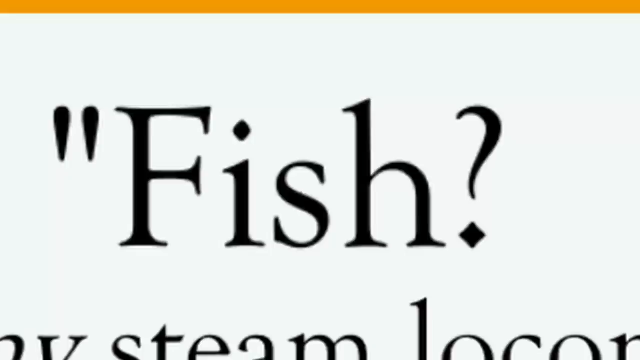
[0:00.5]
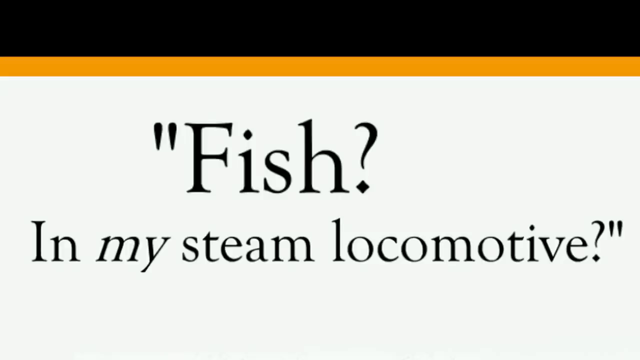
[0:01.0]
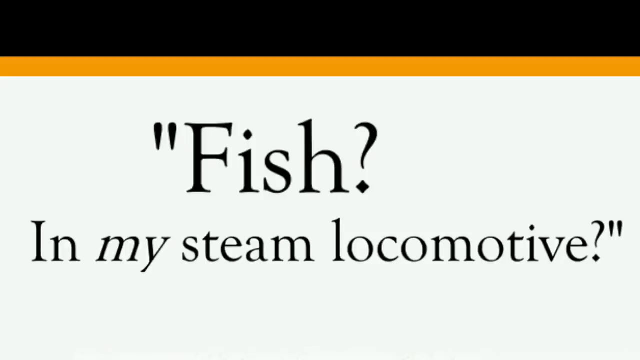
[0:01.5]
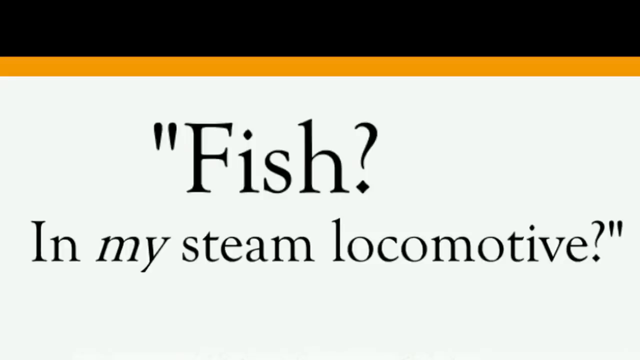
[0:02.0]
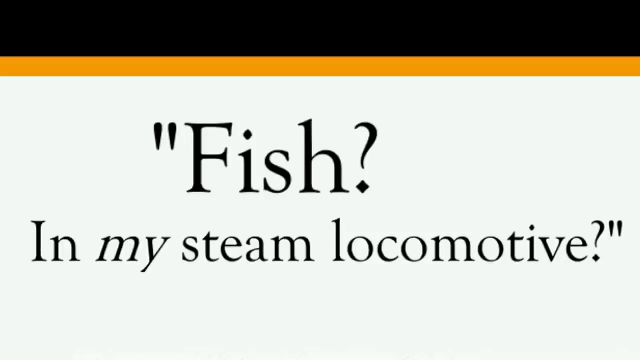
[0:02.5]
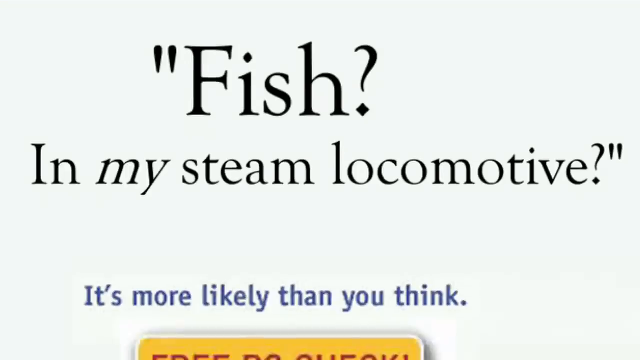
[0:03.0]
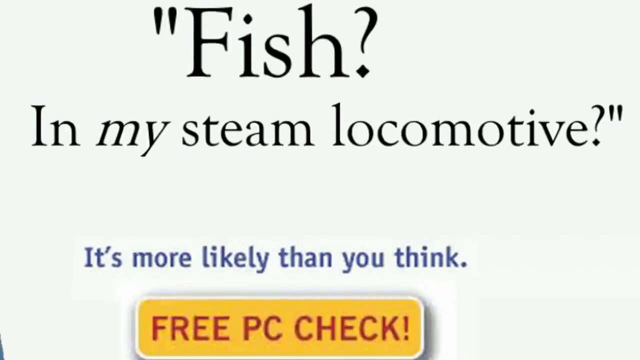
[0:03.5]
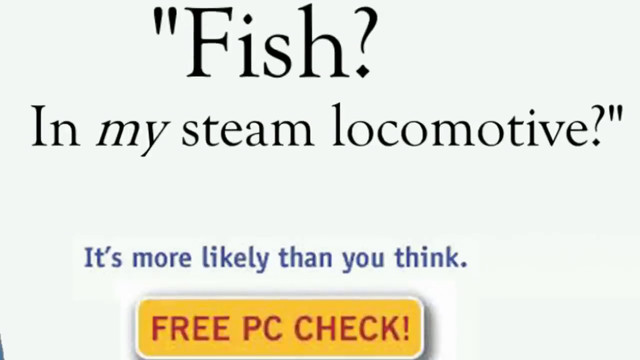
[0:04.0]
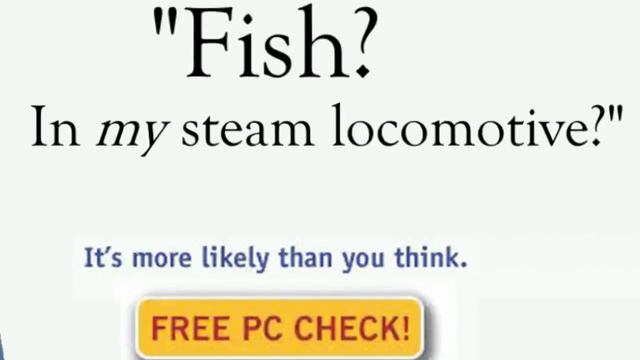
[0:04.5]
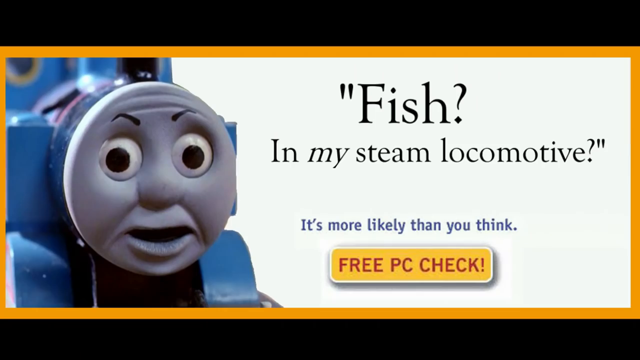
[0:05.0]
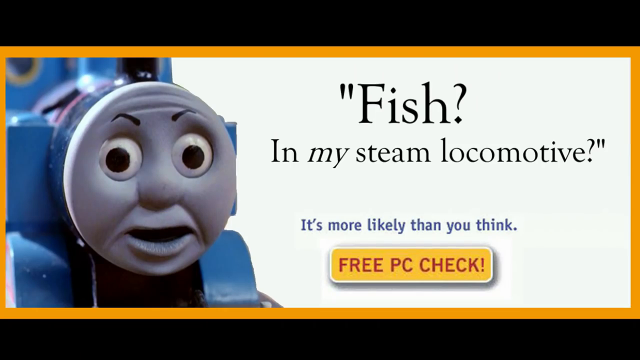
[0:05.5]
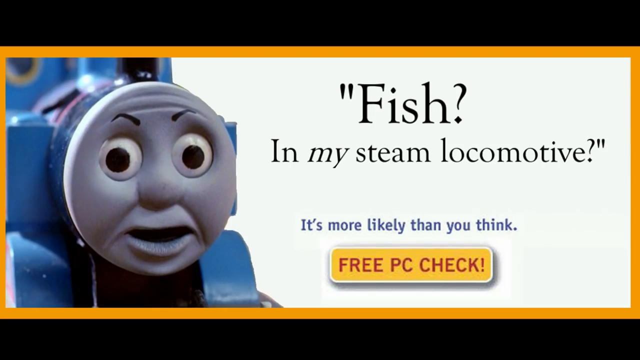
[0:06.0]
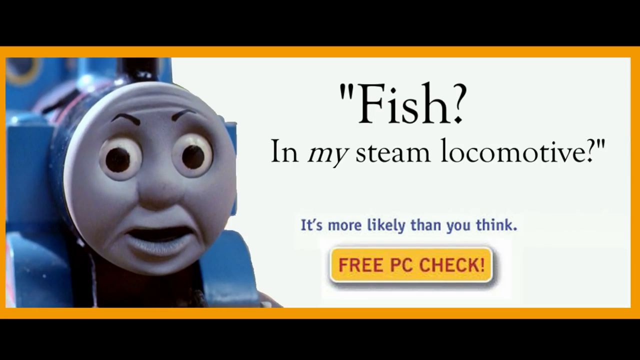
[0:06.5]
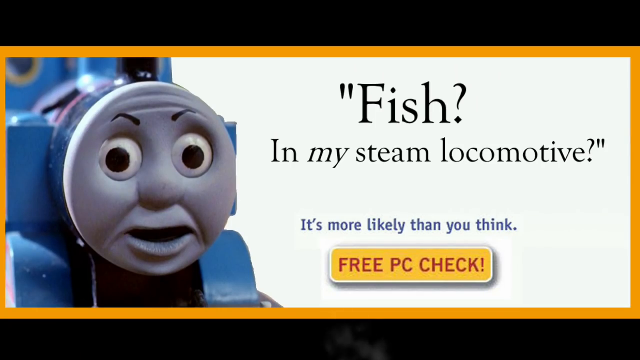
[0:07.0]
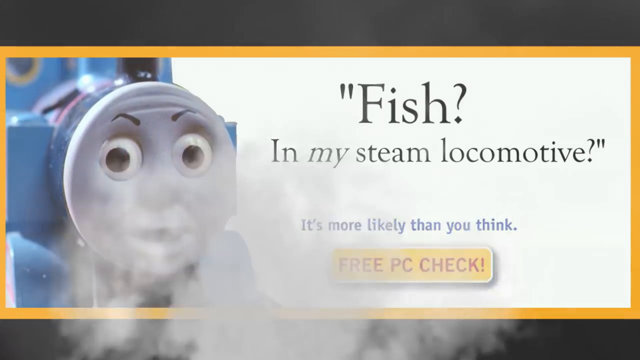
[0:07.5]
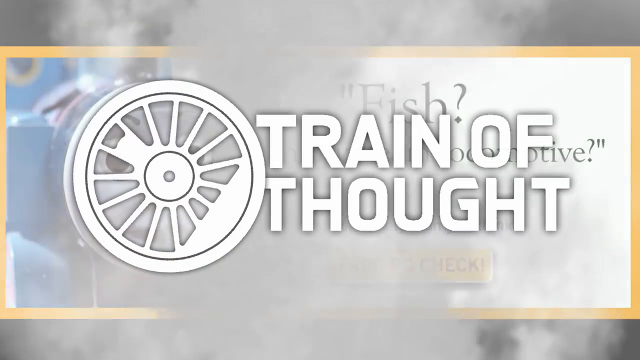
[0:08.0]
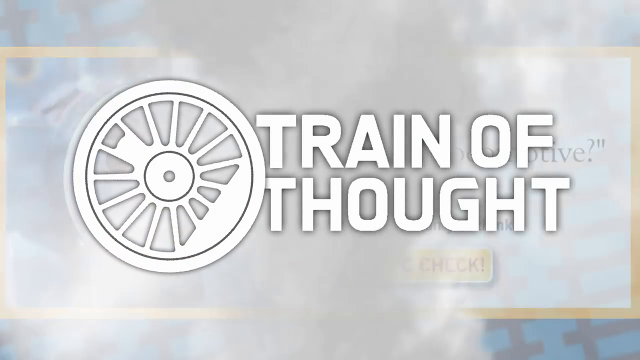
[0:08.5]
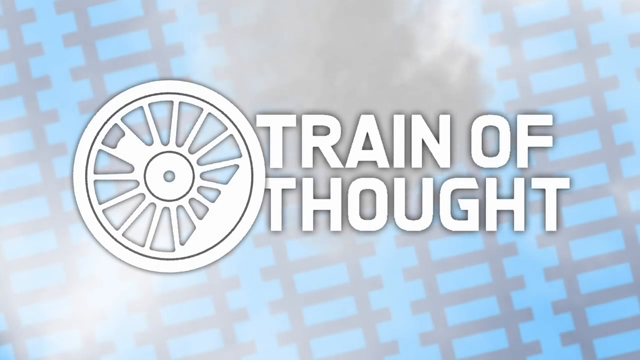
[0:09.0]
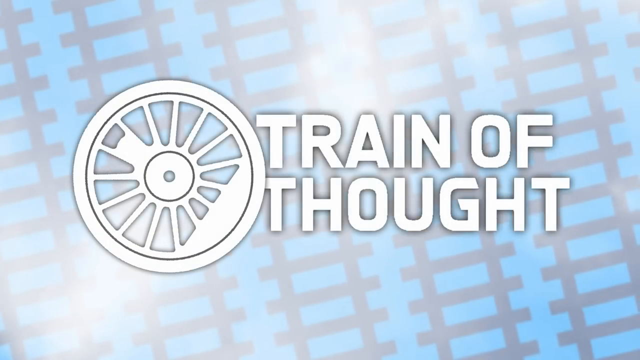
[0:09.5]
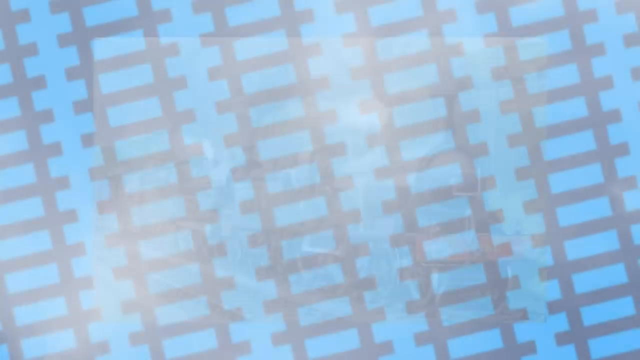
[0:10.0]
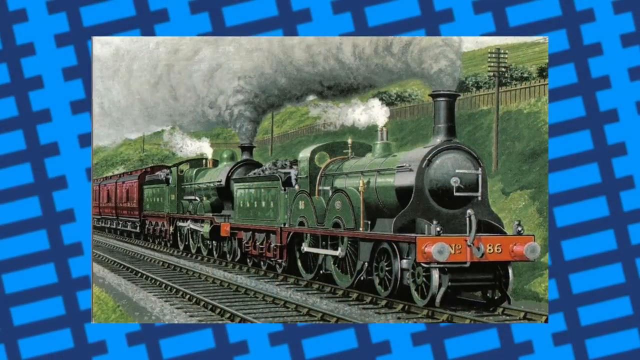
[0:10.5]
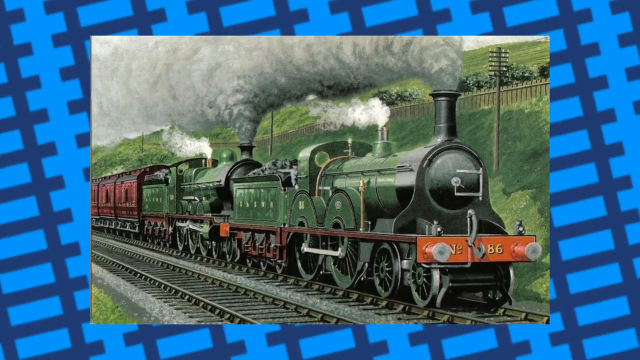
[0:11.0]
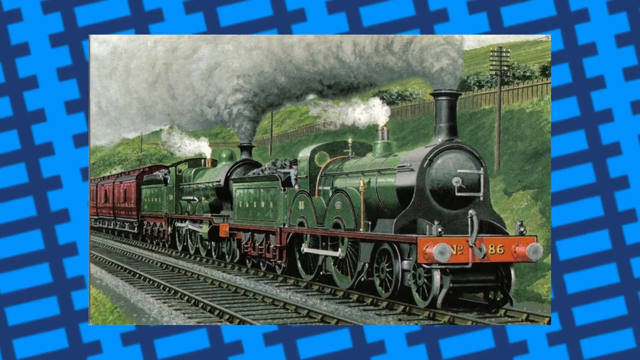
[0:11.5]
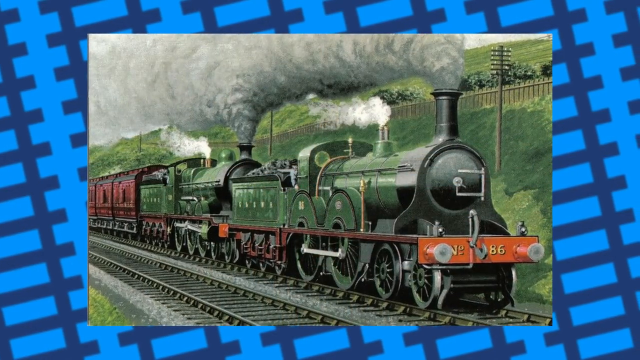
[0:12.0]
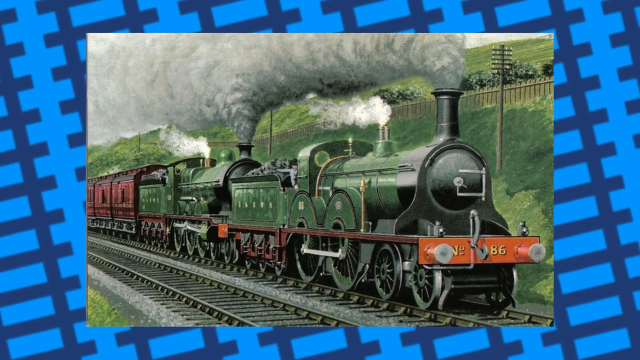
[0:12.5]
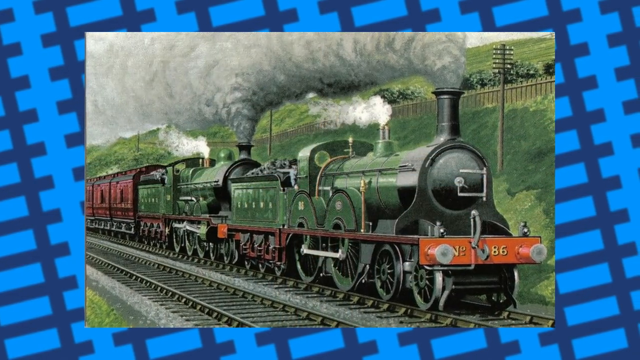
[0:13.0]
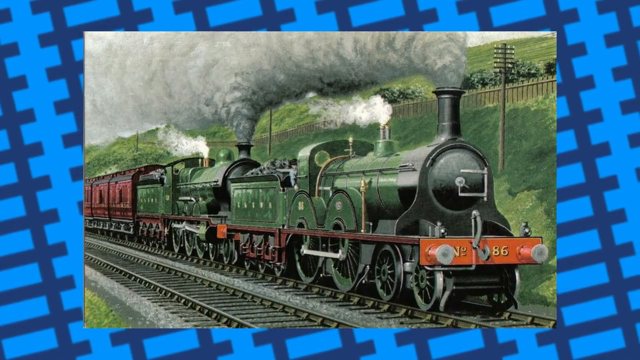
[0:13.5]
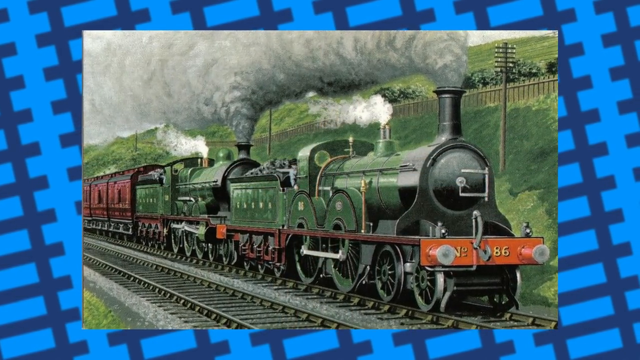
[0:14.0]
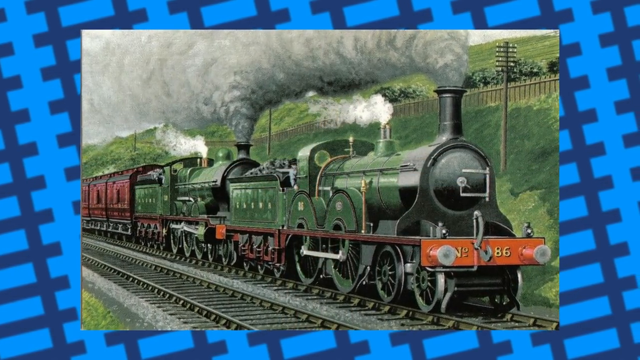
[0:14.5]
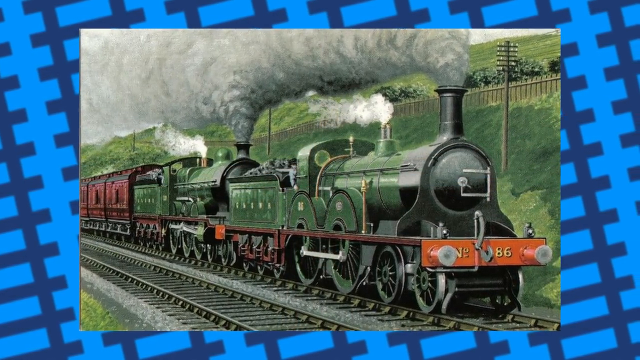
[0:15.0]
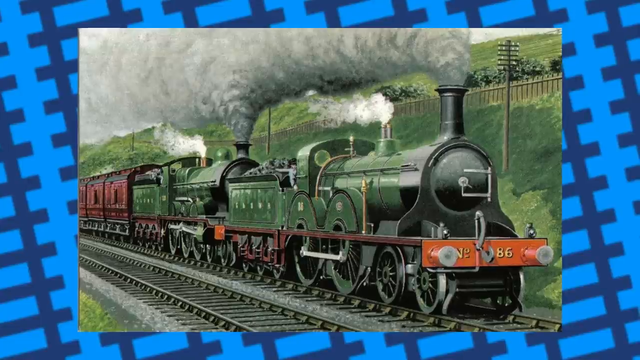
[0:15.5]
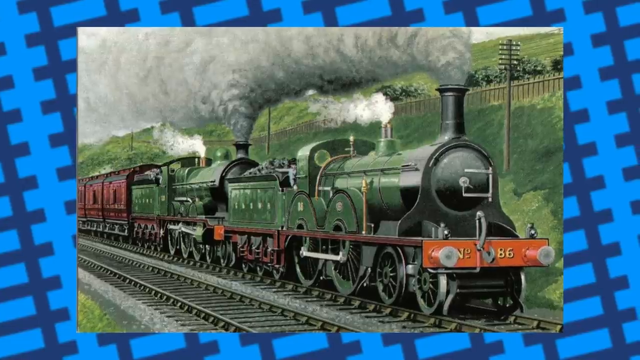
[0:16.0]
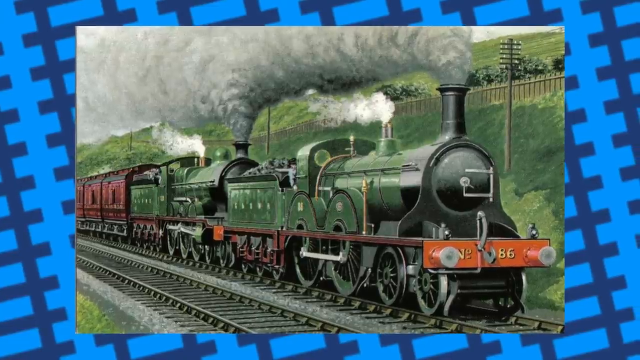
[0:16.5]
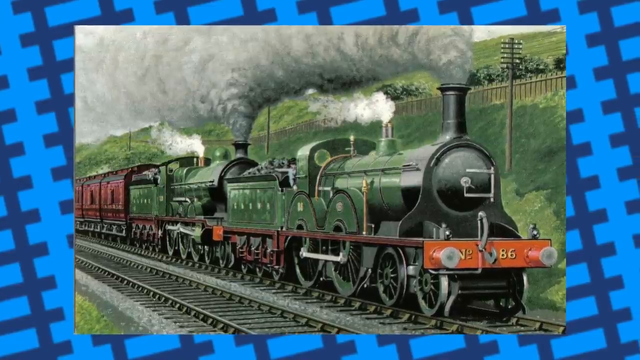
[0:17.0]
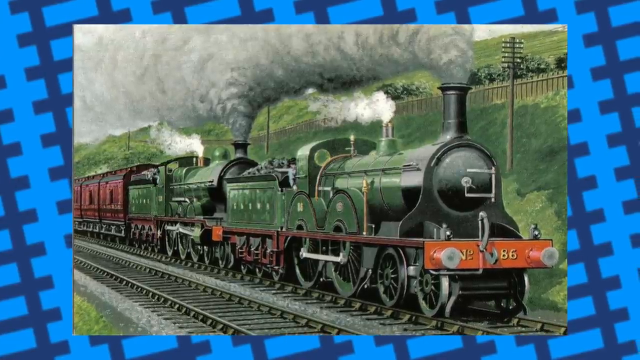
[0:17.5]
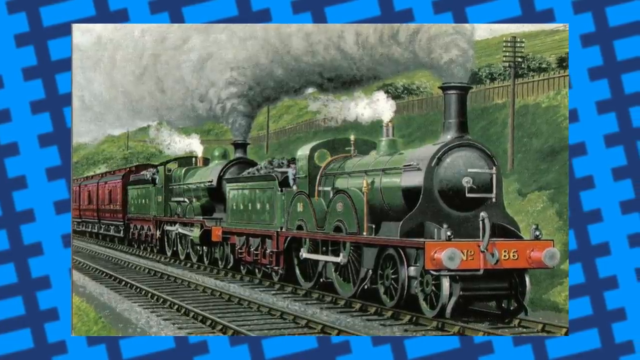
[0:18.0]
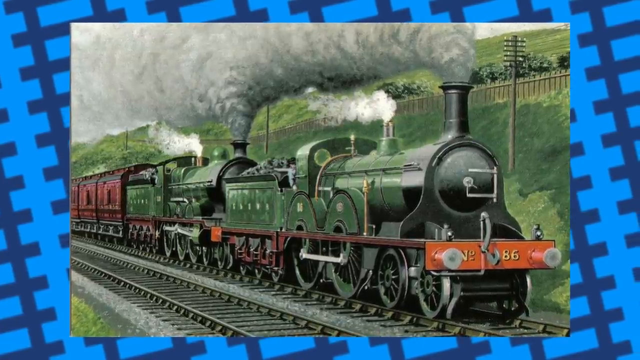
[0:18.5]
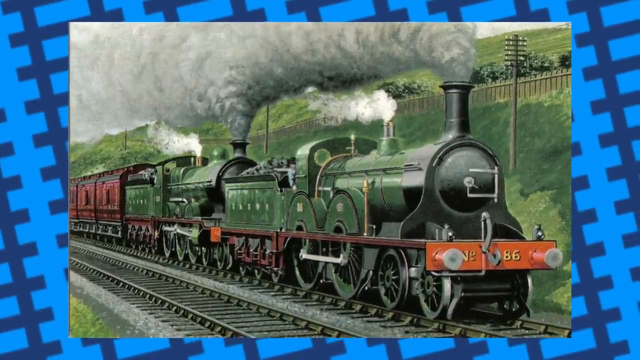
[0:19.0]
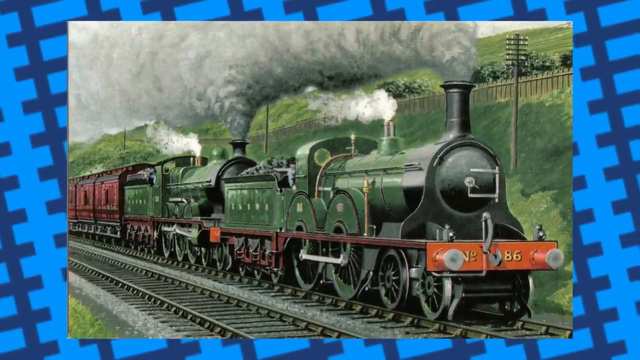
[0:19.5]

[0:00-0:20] The video opens on a white background with a yellow bar at the top showing the word "fish" with a question mark after it in black. Text then reads "fish in my steam locomotive. It's more likely than you think," and a picture of Thomas the train appears on the left with the text "it's more likely than you think free pc check." Steam comes up from the bottom of the screen and the text "train of thought" appears. Next comes a picture of a locomotive train in the middle of a light blue background with dark blue railroad tracks running diagonally across the screen. The first couple of cars of the train are green and the cars after them look to be red. The train appears to be traveling through hilly countryside, with smoke coming out of the smokestacks.